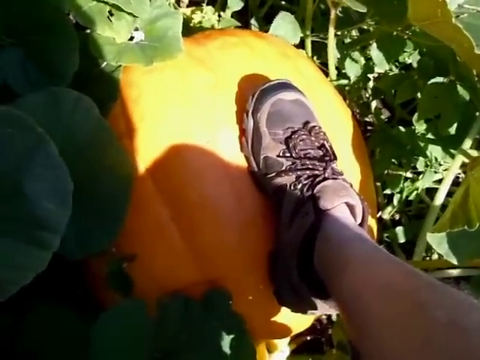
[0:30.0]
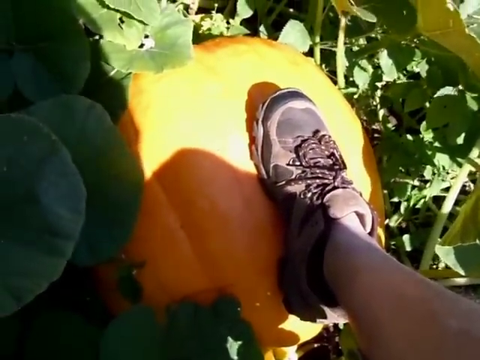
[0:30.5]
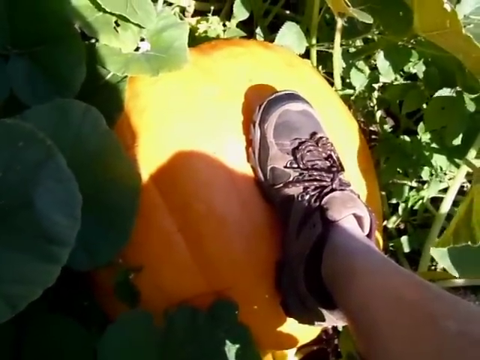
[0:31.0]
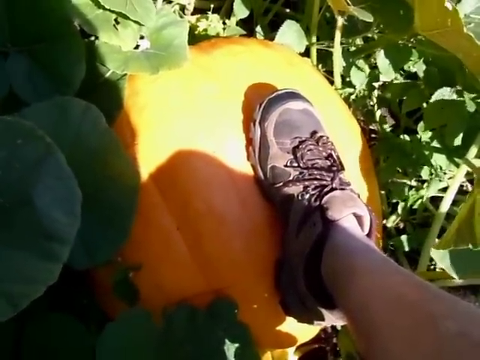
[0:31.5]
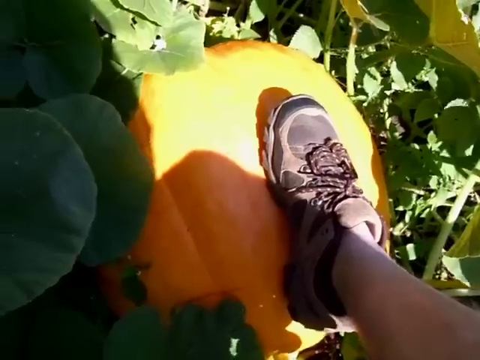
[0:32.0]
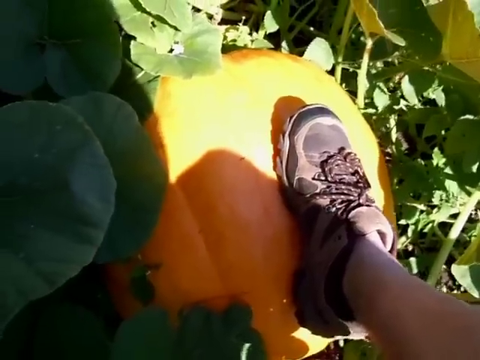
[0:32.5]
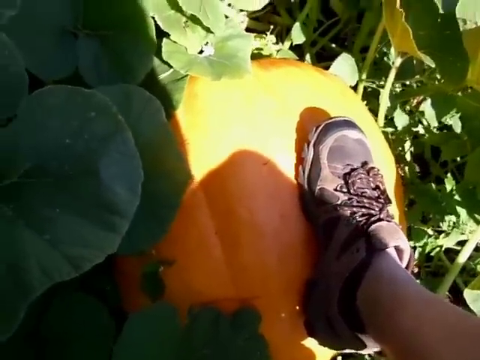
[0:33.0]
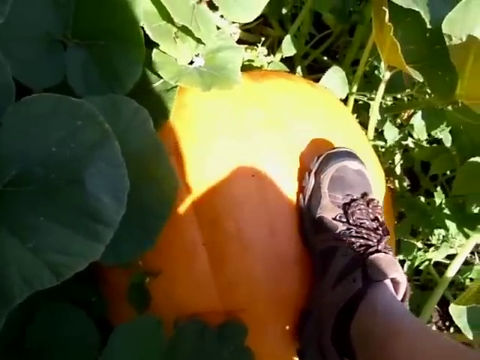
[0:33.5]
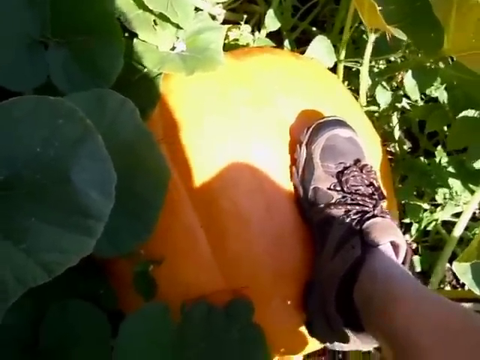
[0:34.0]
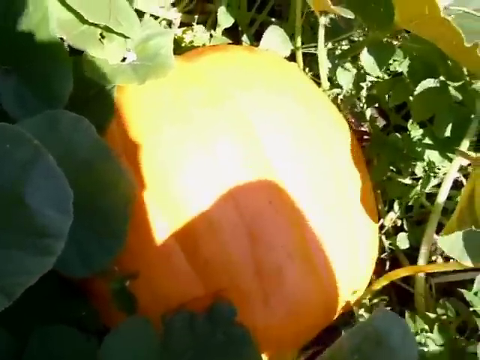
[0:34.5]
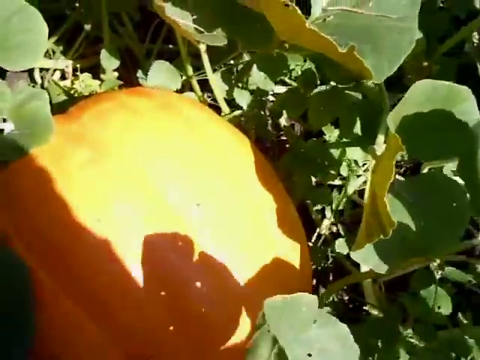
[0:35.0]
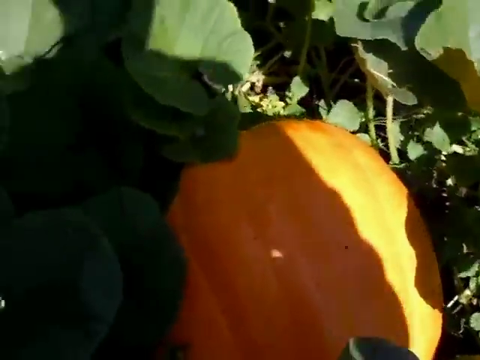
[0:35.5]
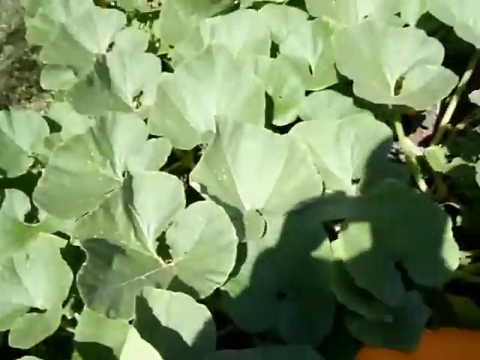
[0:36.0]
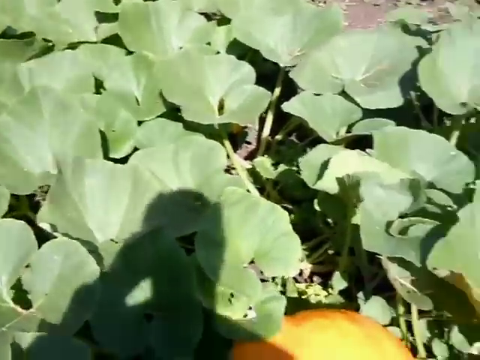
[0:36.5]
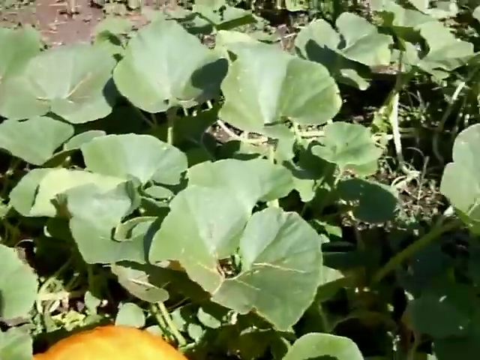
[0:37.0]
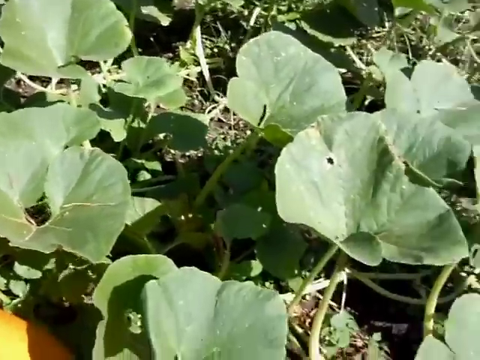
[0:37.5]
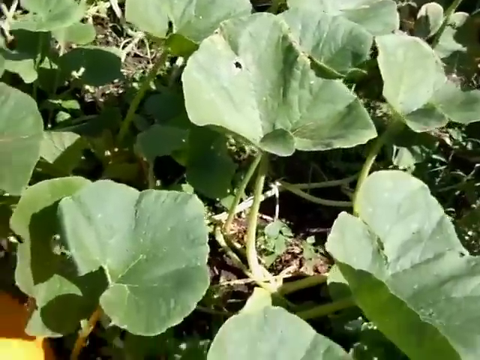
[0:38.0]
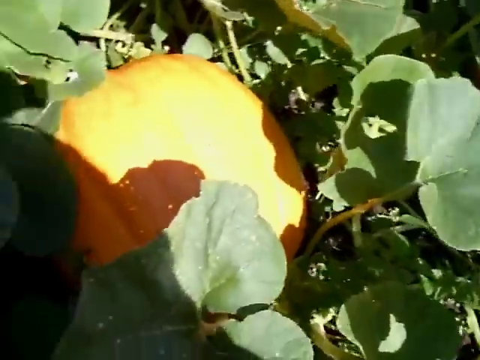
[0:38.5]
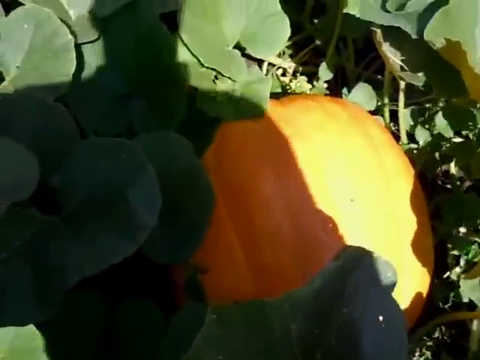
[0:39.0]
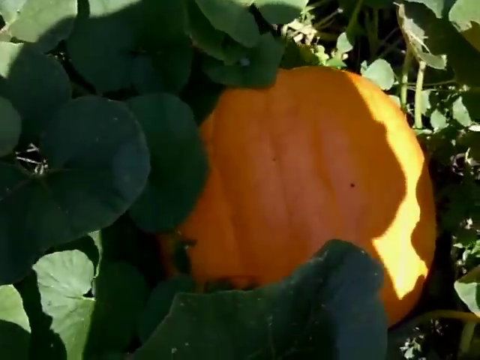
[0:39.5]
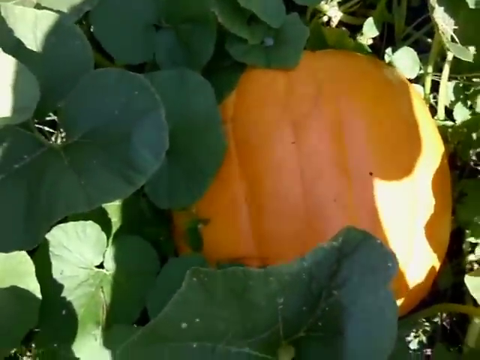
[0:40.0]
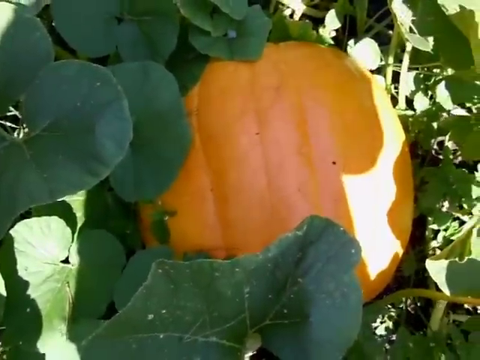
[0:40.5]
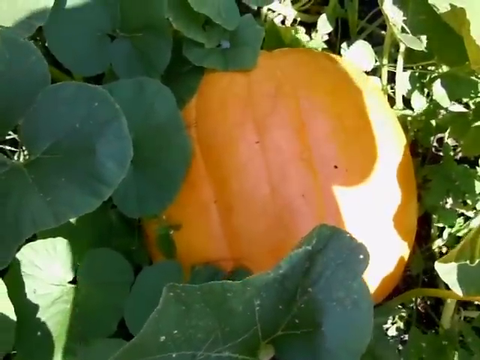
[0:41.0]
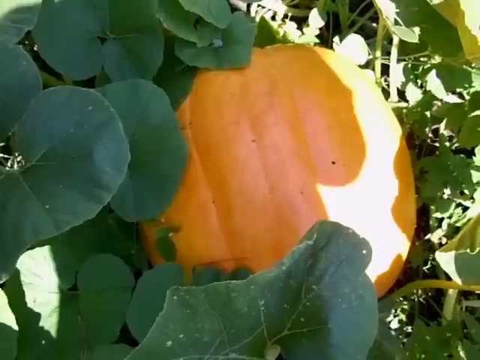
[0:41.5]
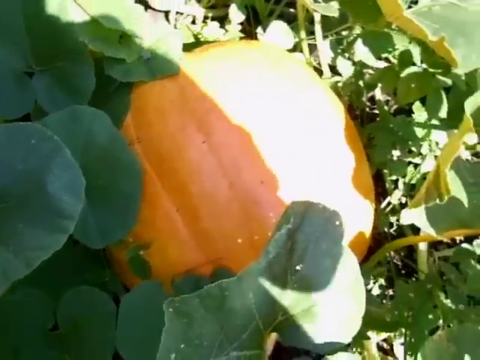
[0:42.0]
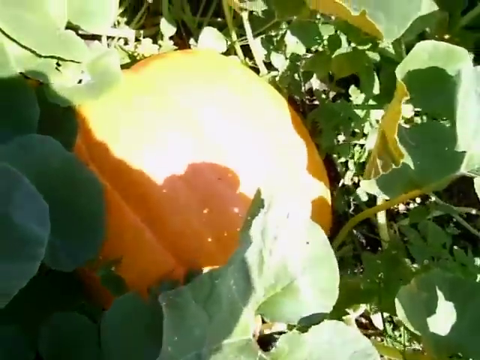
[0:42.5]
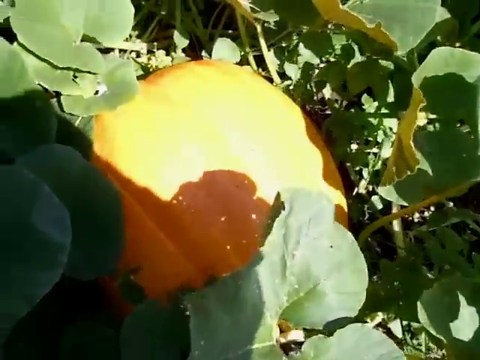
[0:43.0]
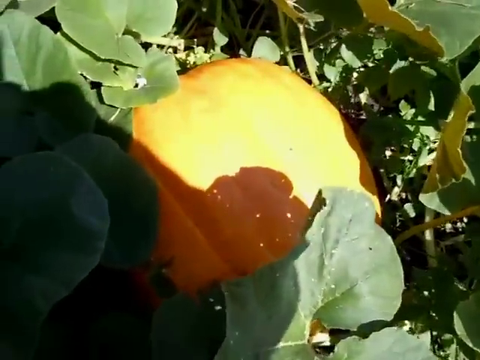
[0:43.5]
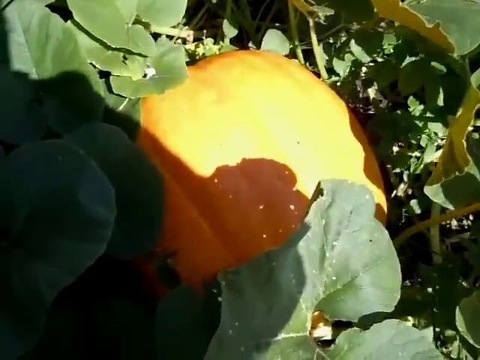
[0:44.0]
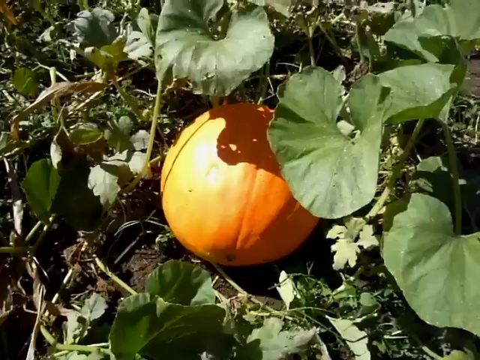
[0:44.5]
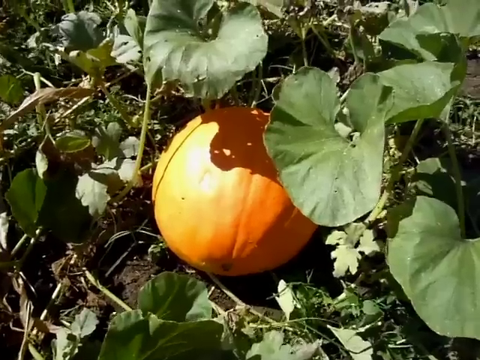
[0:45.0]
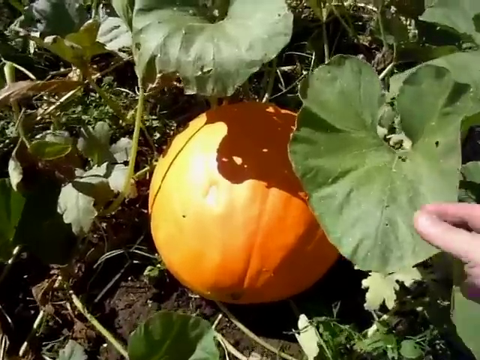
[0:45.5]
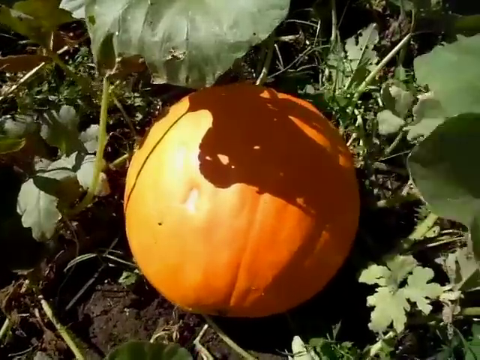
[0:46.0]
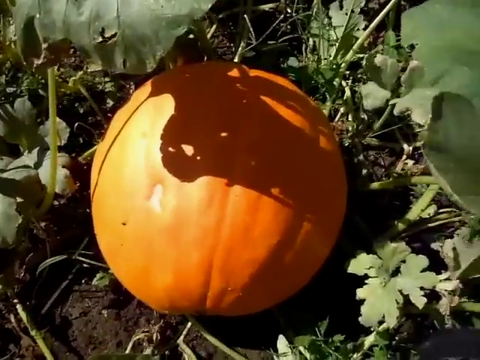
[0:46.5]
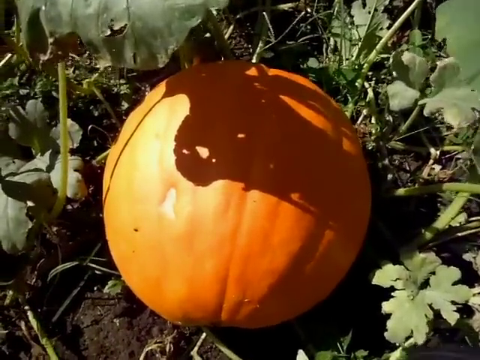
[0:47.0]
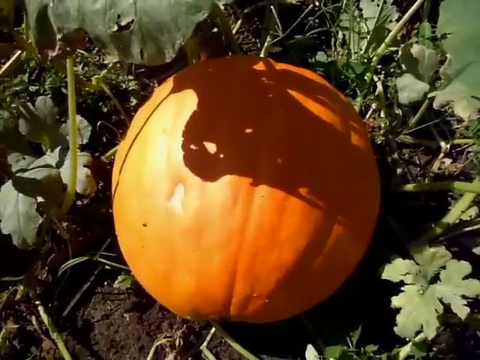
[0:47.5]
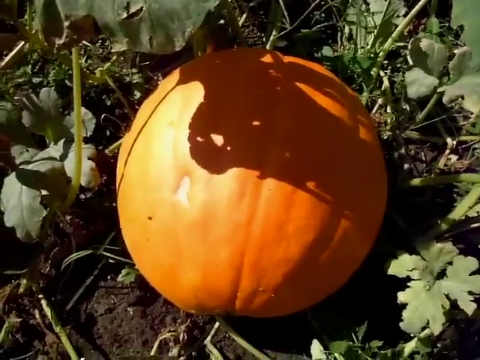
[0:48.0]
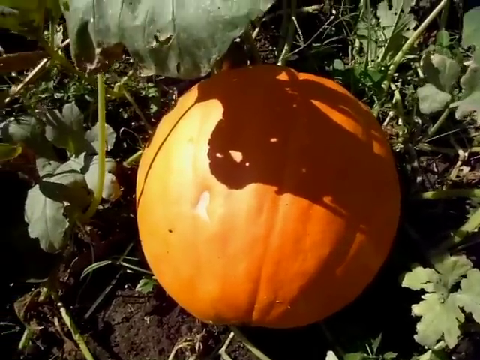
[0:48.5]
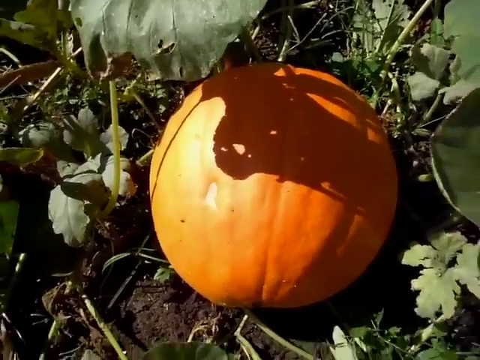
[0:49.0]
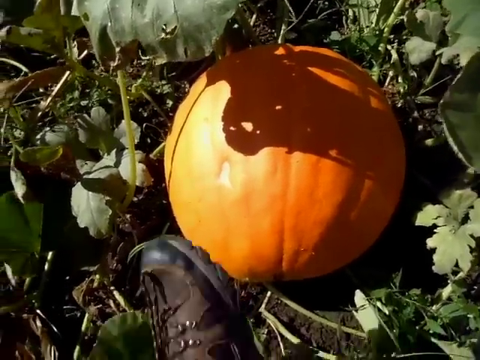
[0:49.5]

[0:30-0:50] A person's right foot rests on top of a pumpkin in the field; they wear a brown and tan sneaker with brown and tan laces. The pumpkin vine surrounds the pumpkin, and sunlight falls across the top of it. The camera moves slightly, and the person removes their foot. The view pans around the vines, which are uniformly green and healthy looking. The person's shadow is visible as they are backlit by the sun. The image changes to a second pumpkin, which is nearly perfectly round. It is dark orange on the right side, and on its left side it has a pale divot, as though something had taken a bite out of it. The person places their left foot on this pumpkin, again wearing the brown and tan sneaker with brown and tan laces.